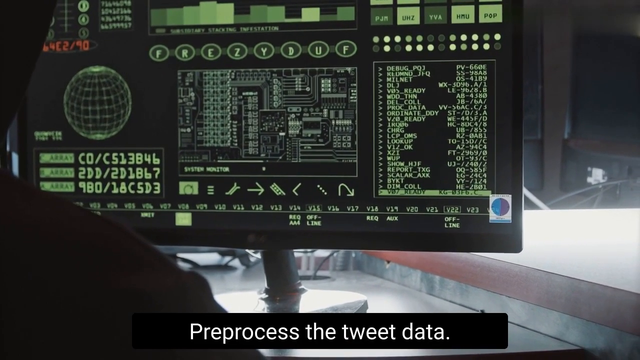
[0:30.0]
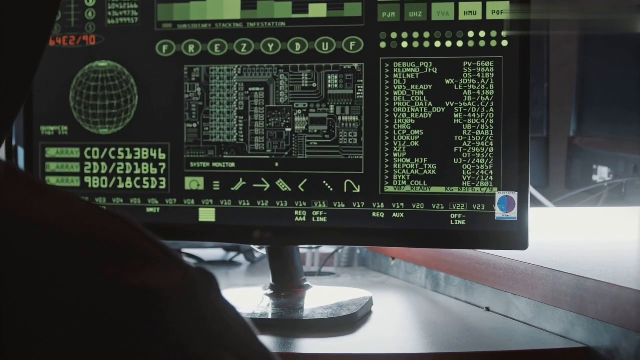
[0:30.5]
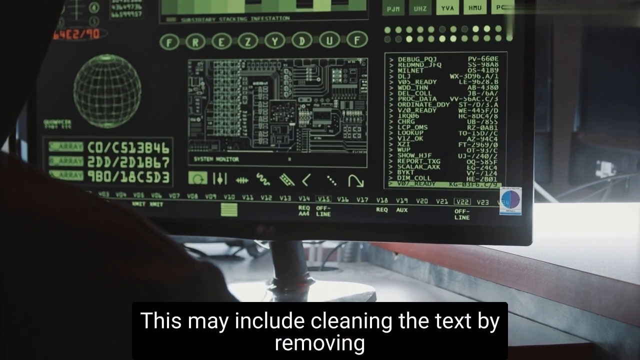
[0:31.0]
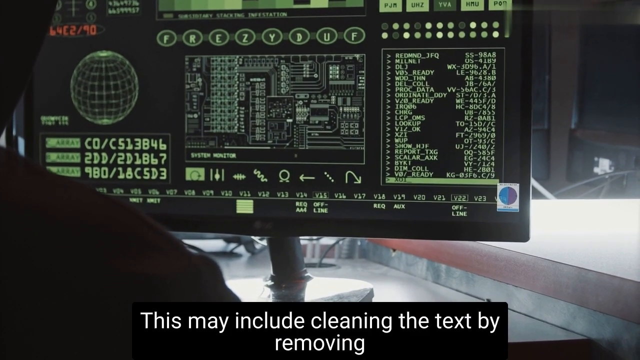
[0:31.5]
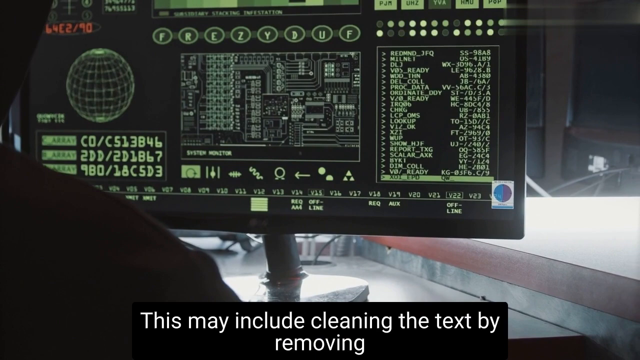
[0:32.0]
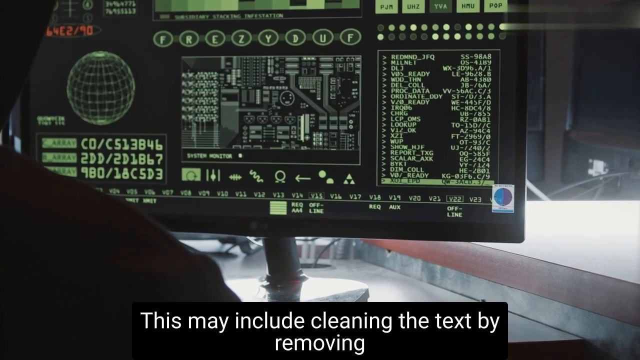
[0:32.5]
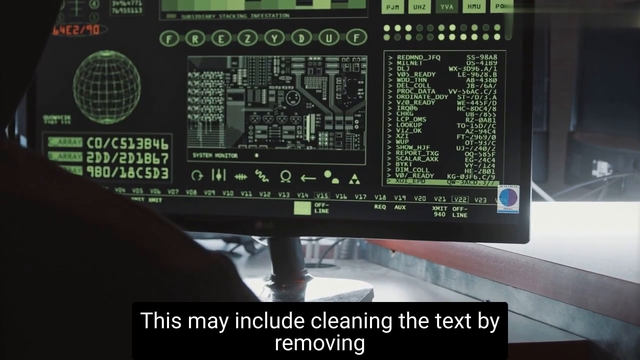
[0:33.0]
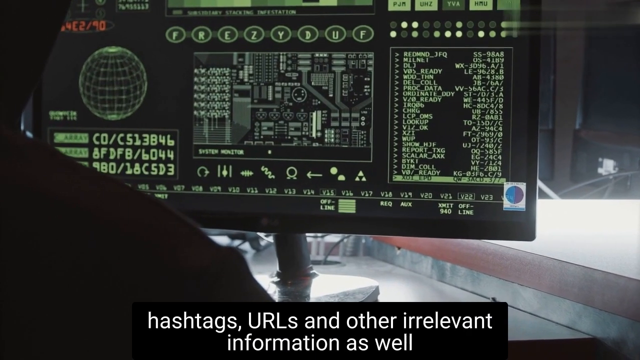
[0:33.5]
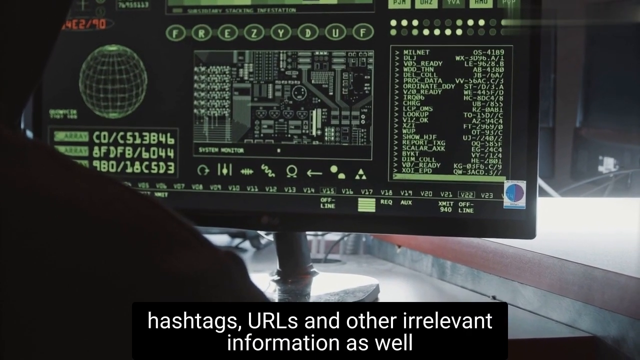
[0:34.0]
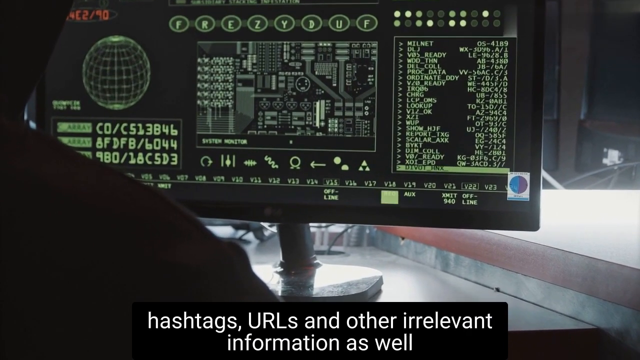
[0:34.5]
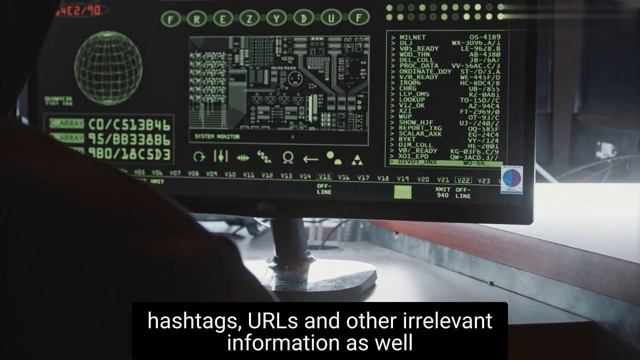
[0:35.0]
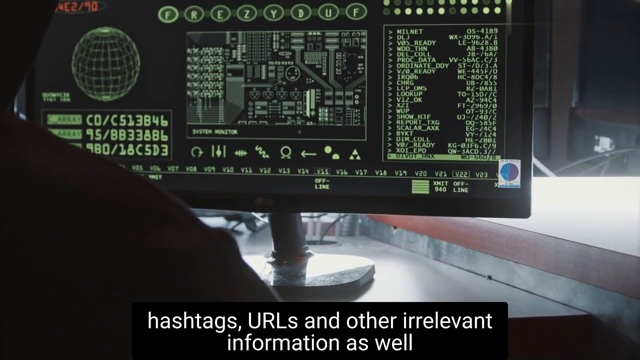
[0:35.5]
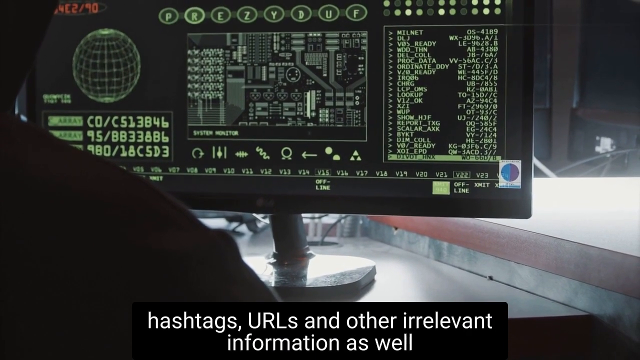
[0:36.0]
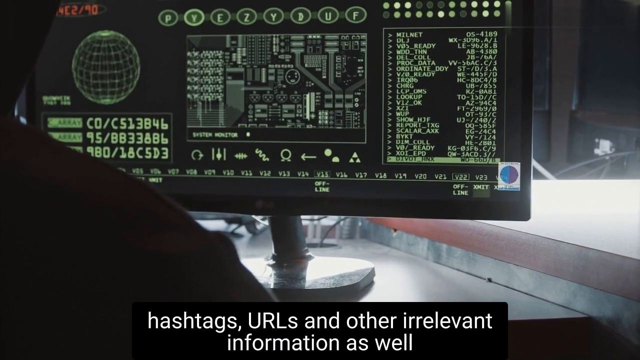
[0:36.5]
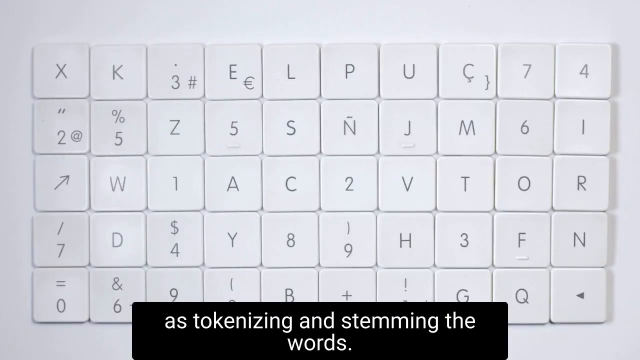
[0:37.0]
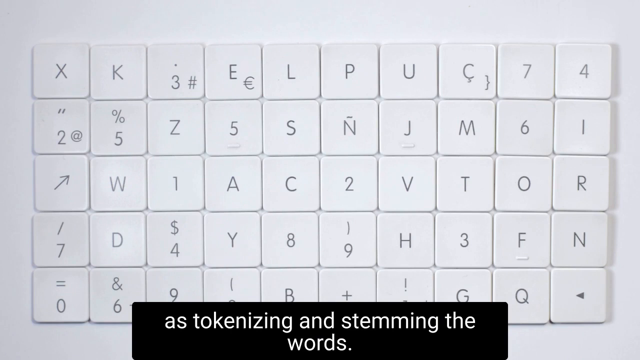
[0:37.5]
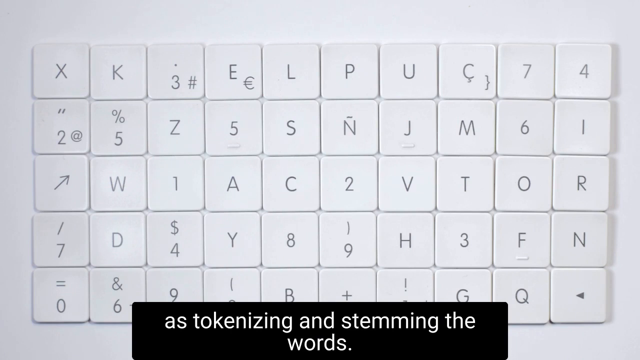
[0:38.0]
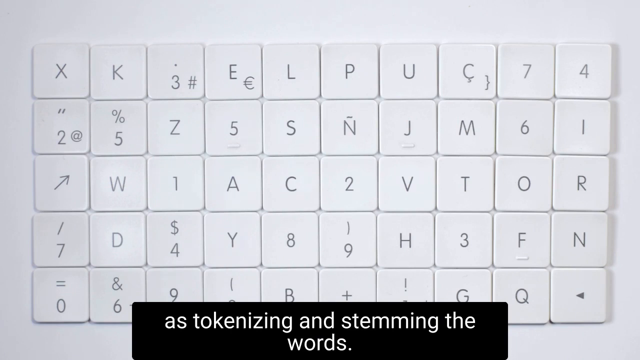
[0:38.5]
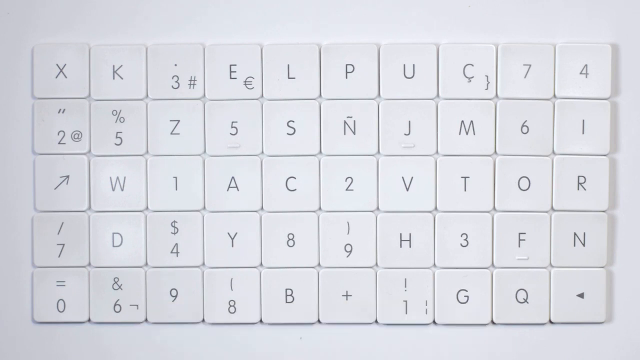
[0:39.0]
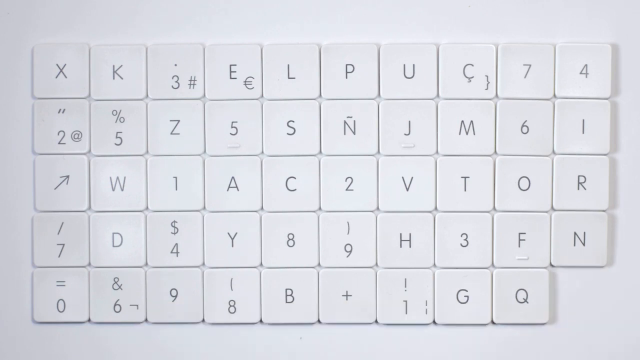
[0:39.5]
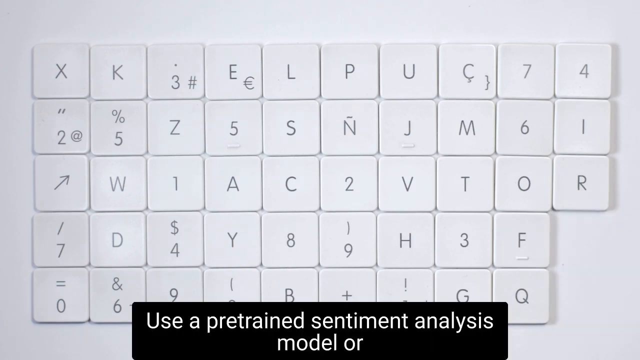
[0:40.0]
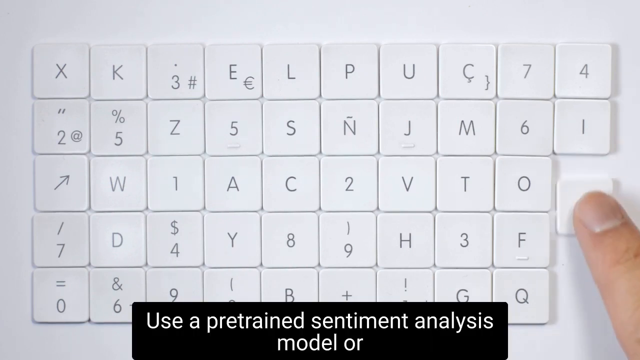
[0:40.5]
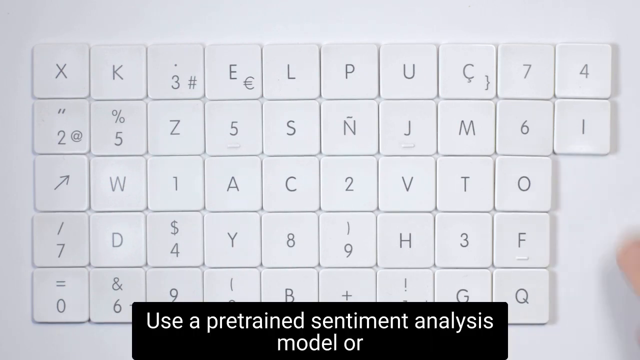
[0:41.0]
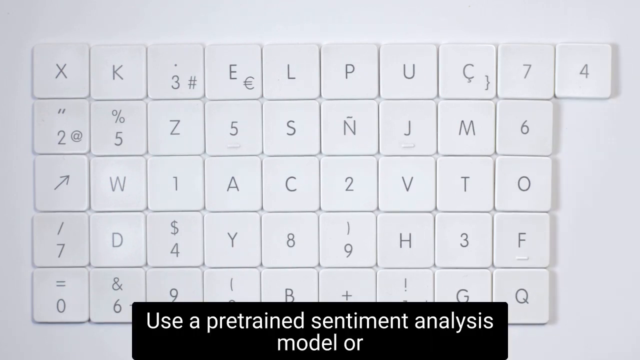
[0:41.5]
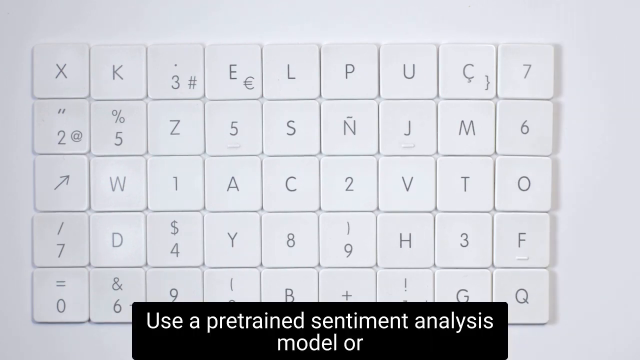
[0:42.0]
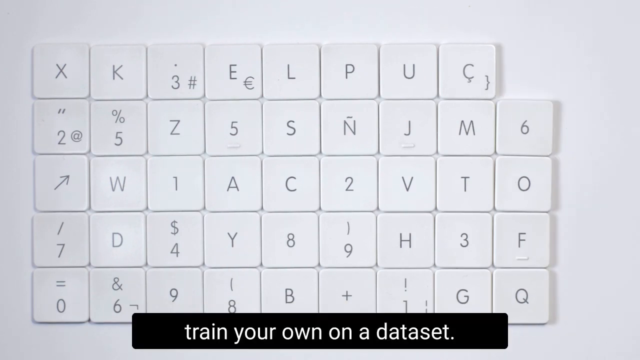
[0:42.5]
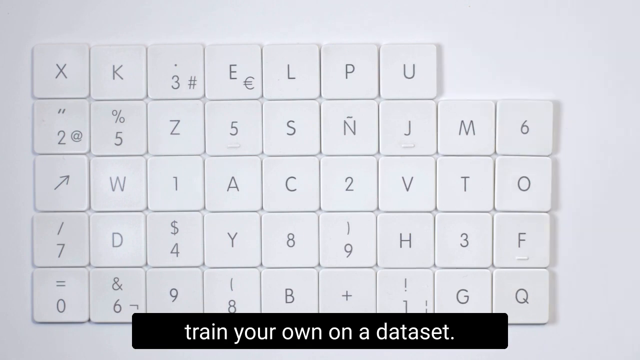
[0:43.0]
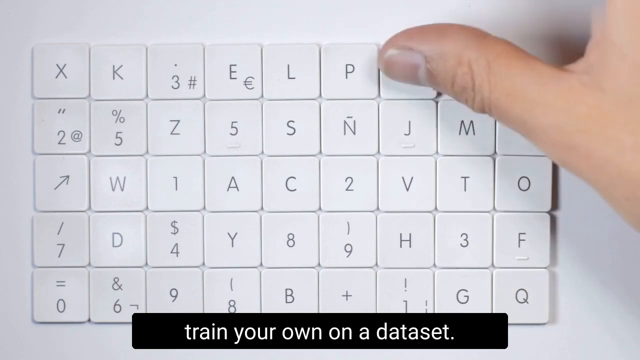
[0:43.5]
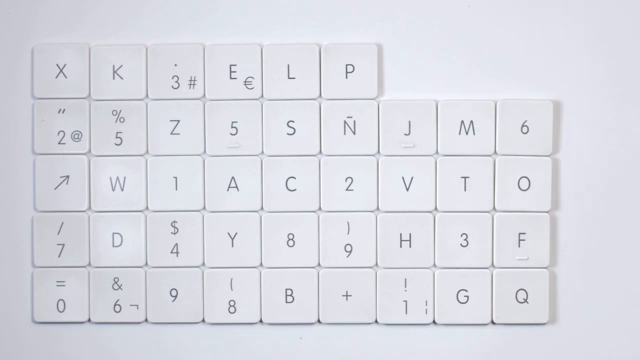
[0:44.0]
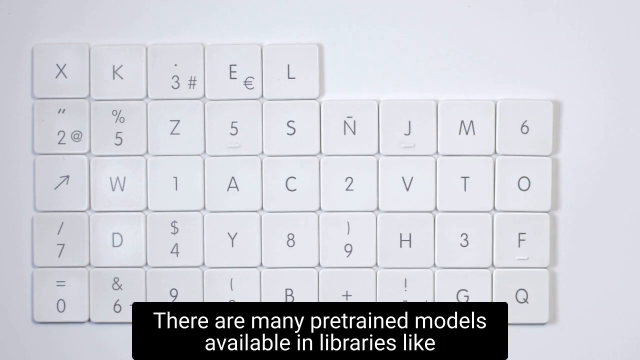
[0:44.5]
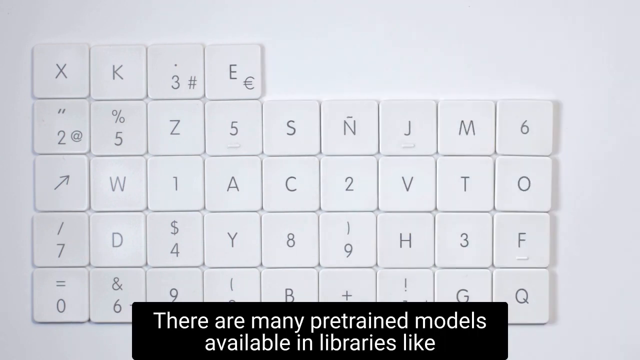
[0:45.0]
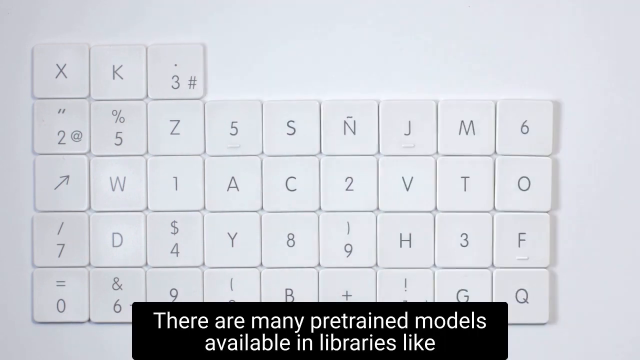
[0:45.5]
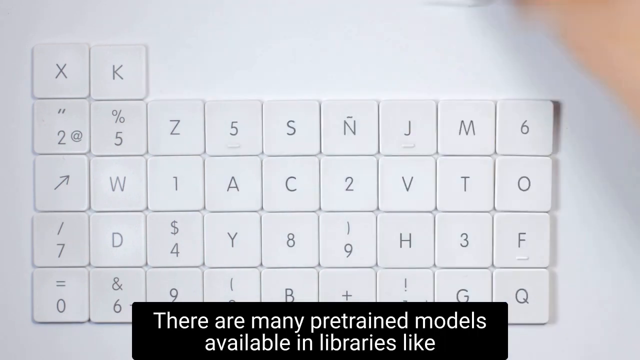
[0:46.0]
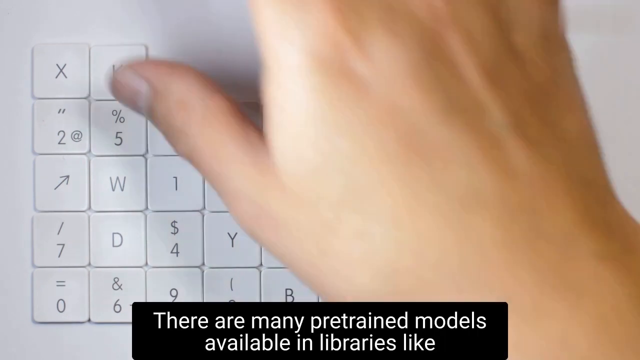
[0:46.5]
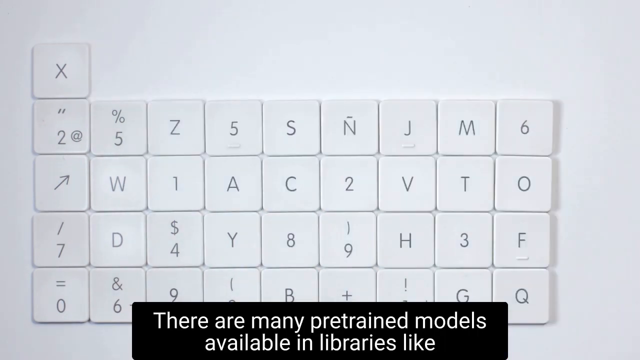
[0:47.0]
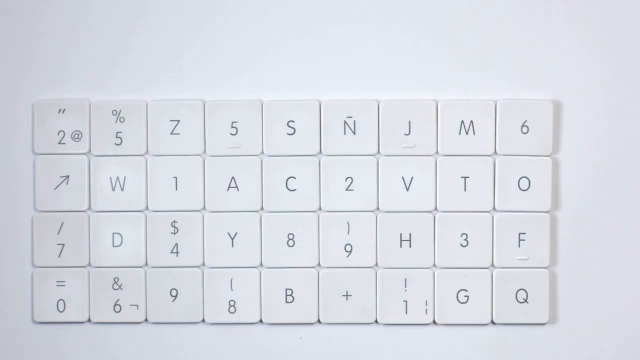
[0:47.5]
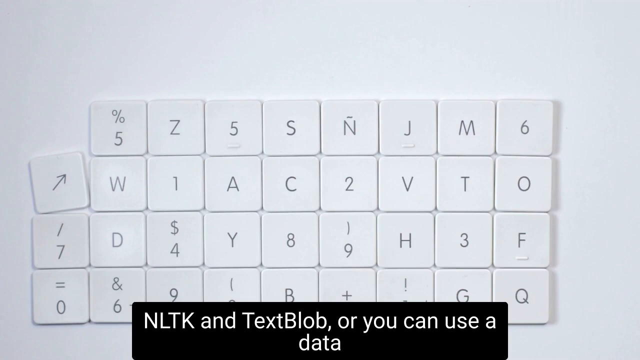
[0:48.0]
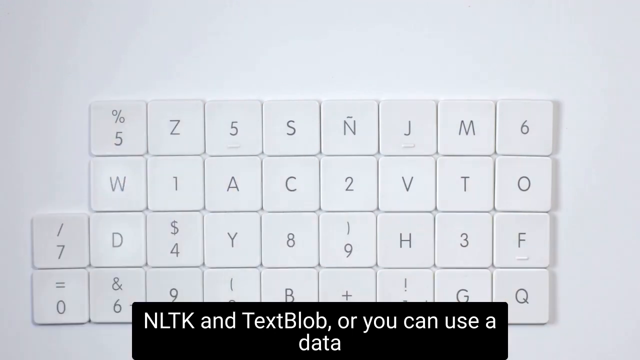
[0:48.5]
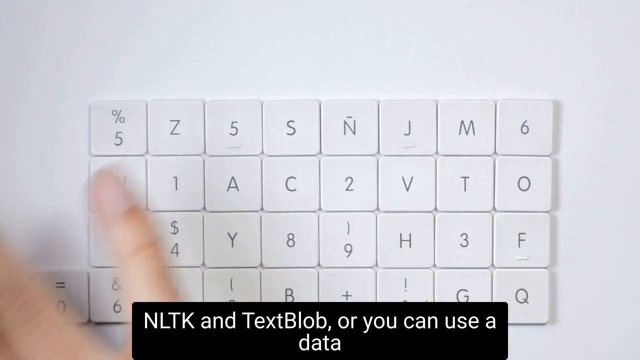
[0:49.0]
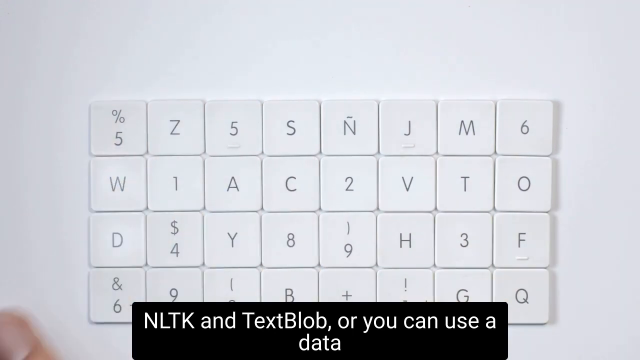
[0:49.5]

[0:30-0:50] The green computer scene with the man appears, then the video cuts to a blank white background covered with tiles. He moves the tiles, starting from the left side, going across the top row, and then back to the left column, and it looks like he is about to start on the bottom row. The white tiles being removed look like keypad tiles, arranged in what appears to be 10 columns and five rows; it seems to be a keypad, possibly not a standard QWERTY one. Text in black boxes at the bottom reads: "This may include cleaning the text by removing hashtags, URLs, and other relevant information, as well as tokenizing and stemming the words. Use a pre-trained sentiment analysis to train your own on a data set. There are many pre-trained models available in libraries like NLTK and TextBlob, or train your own."